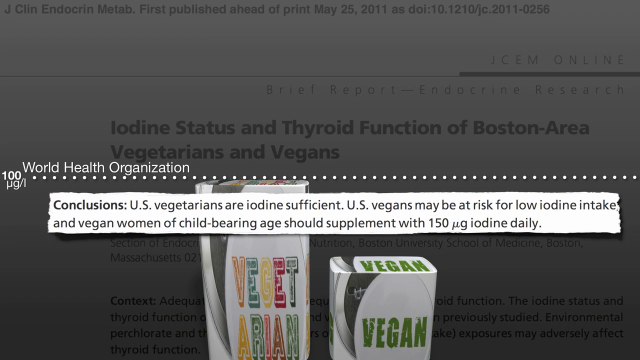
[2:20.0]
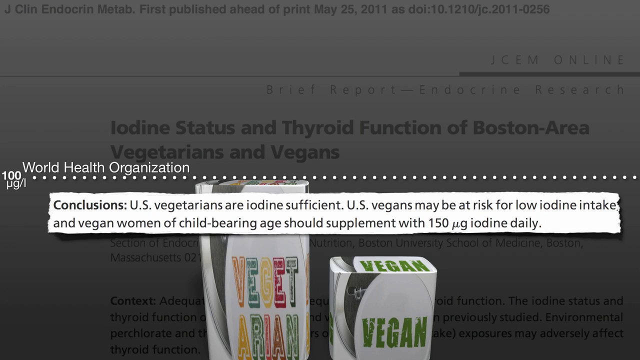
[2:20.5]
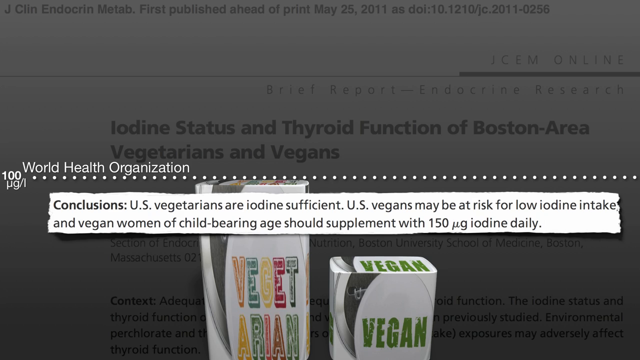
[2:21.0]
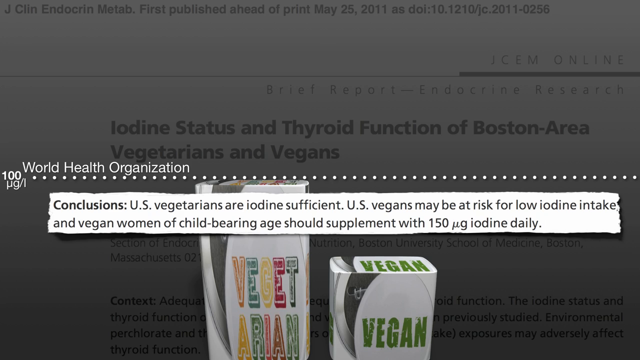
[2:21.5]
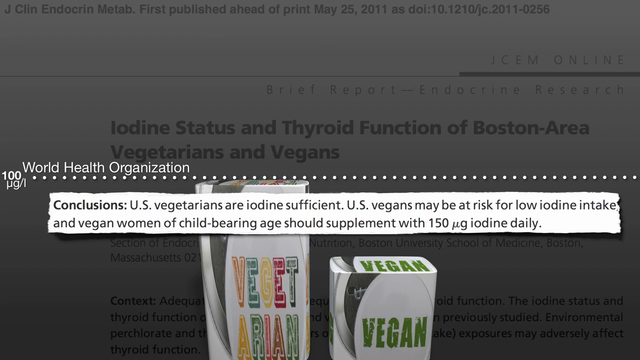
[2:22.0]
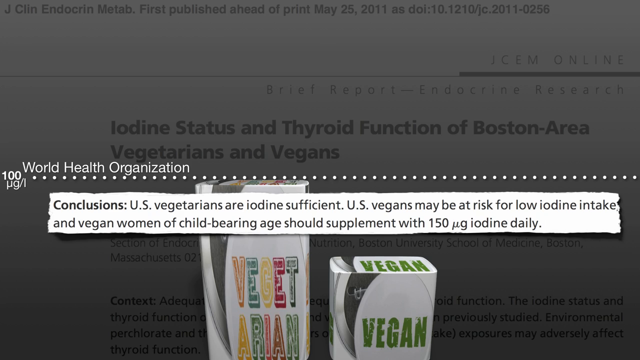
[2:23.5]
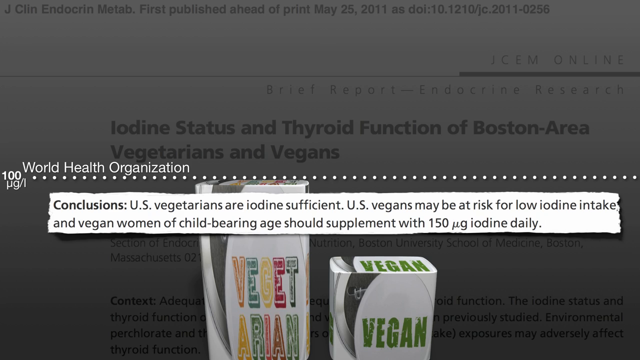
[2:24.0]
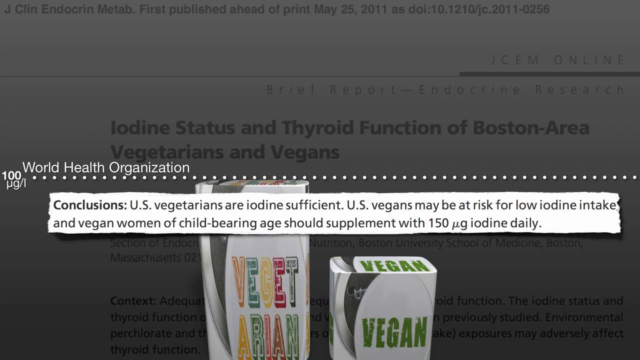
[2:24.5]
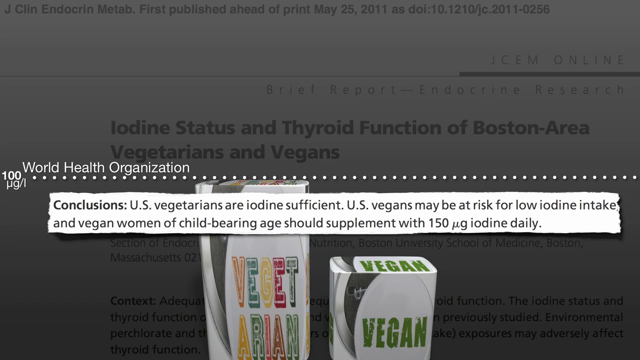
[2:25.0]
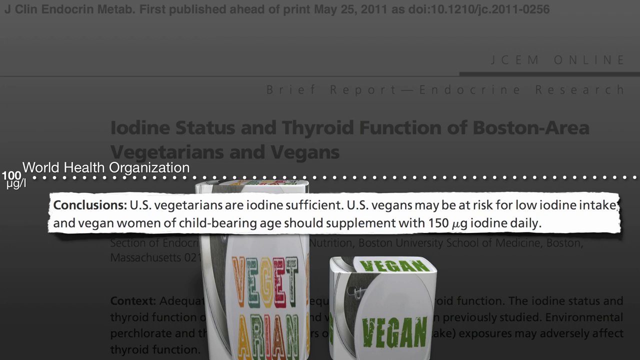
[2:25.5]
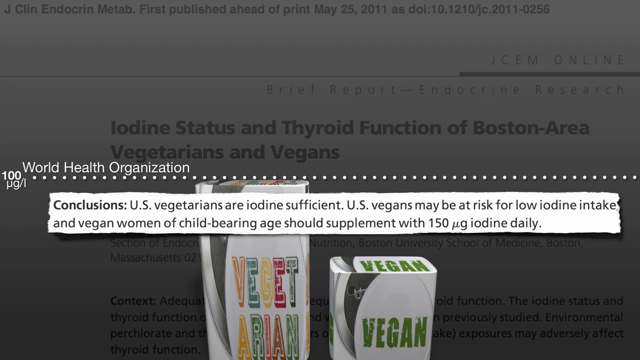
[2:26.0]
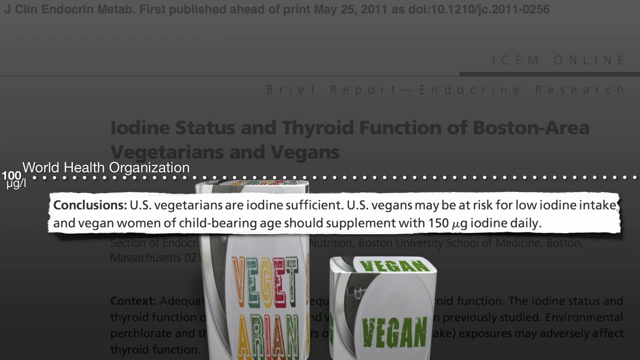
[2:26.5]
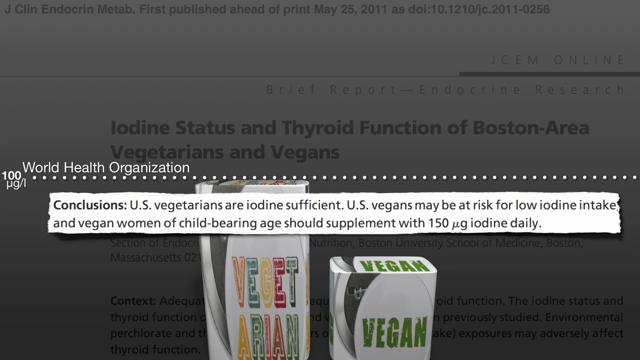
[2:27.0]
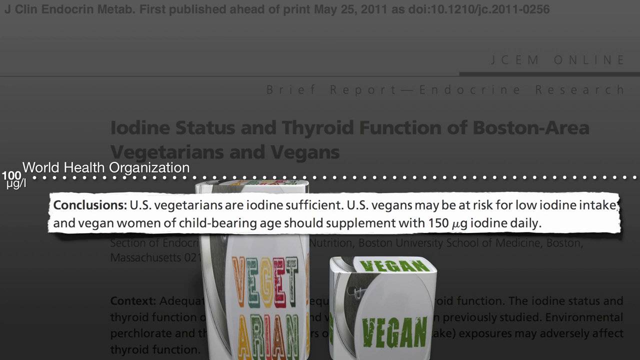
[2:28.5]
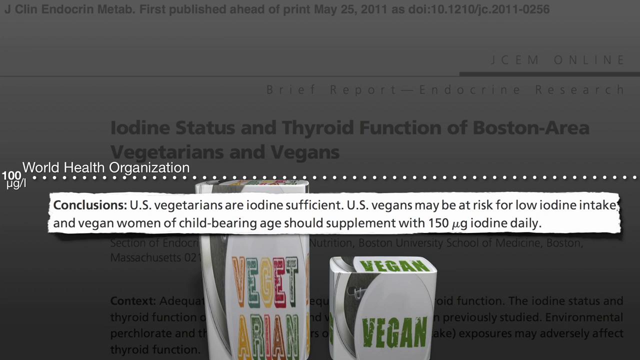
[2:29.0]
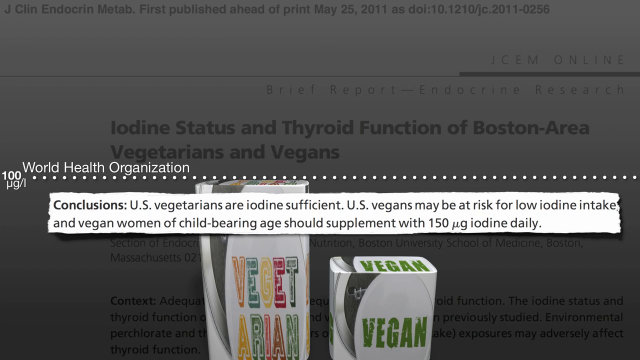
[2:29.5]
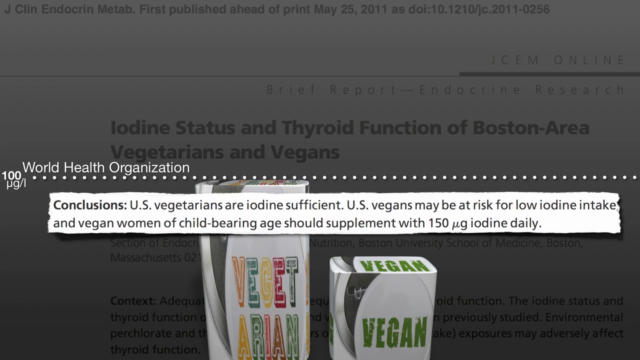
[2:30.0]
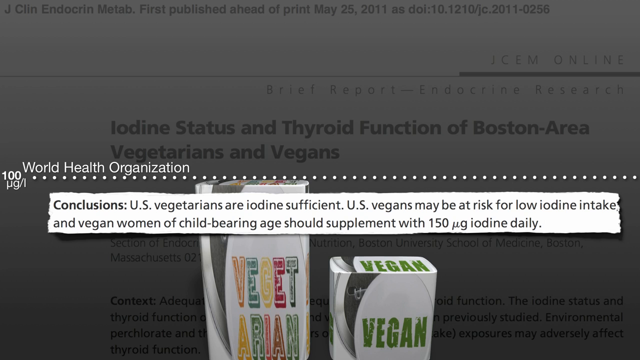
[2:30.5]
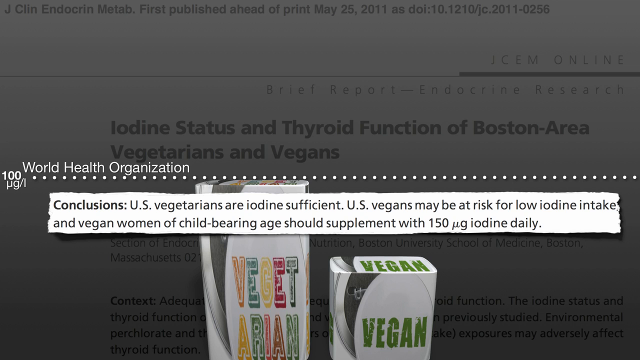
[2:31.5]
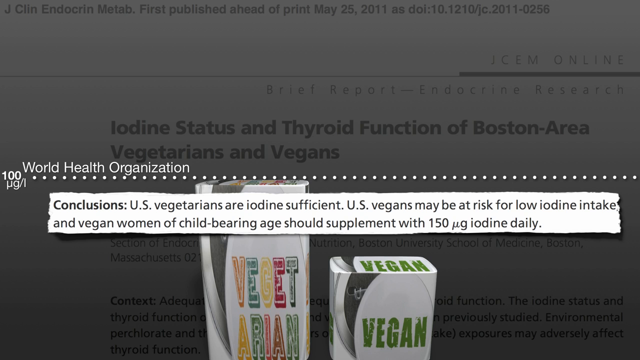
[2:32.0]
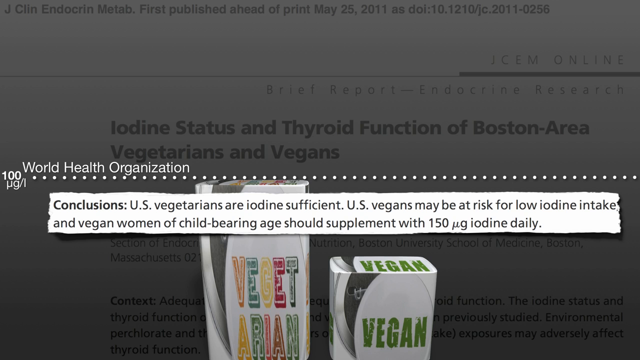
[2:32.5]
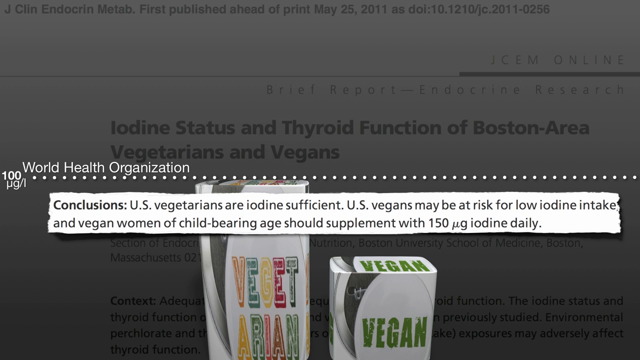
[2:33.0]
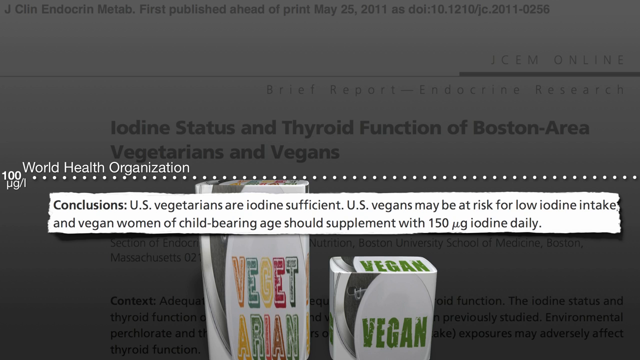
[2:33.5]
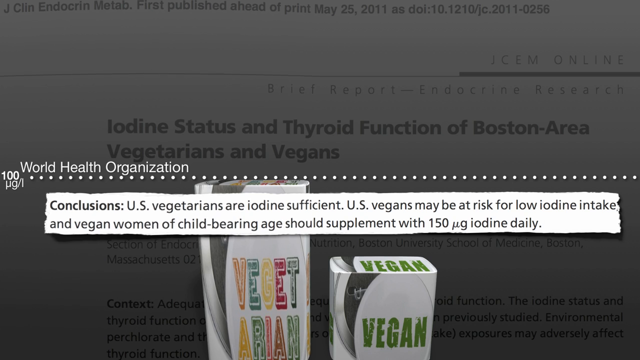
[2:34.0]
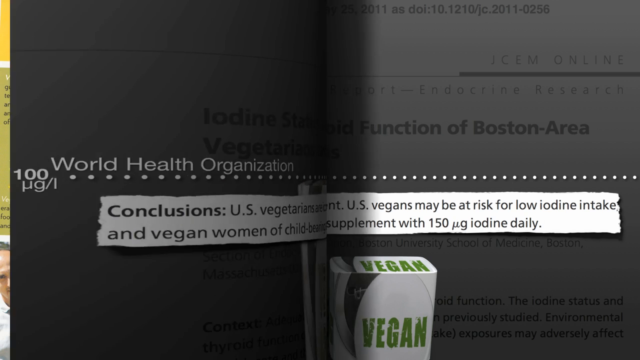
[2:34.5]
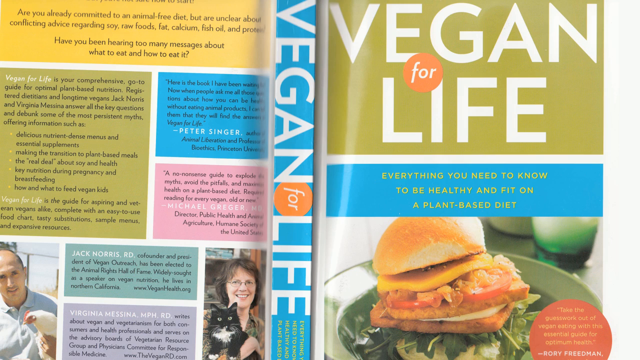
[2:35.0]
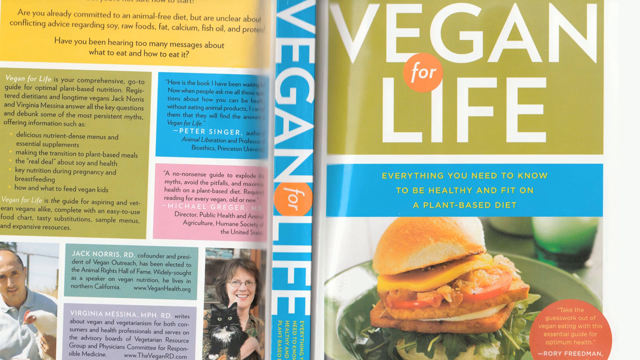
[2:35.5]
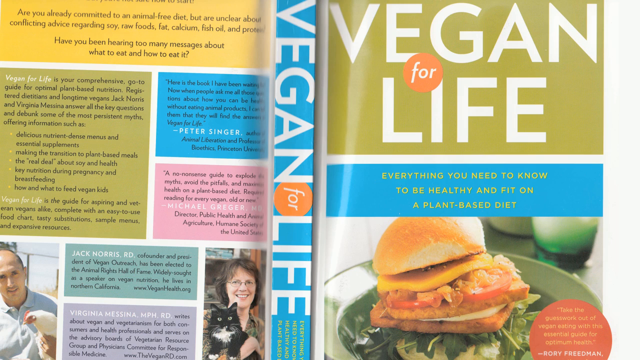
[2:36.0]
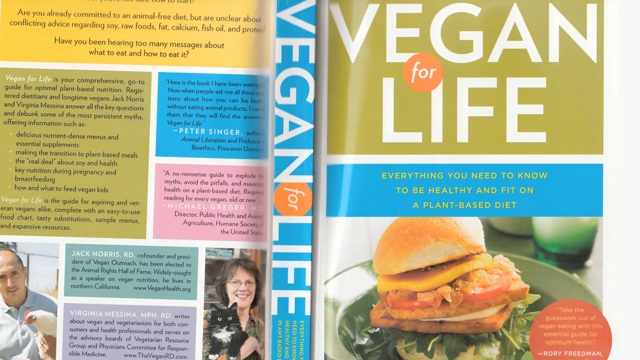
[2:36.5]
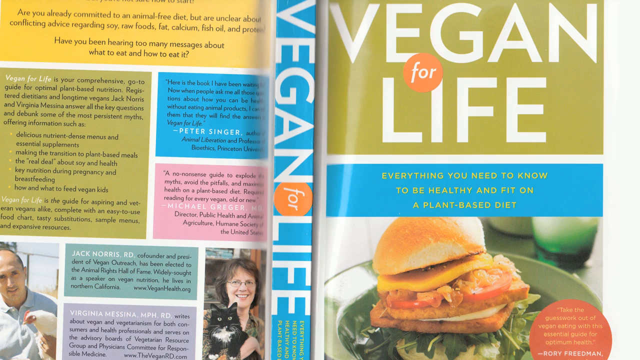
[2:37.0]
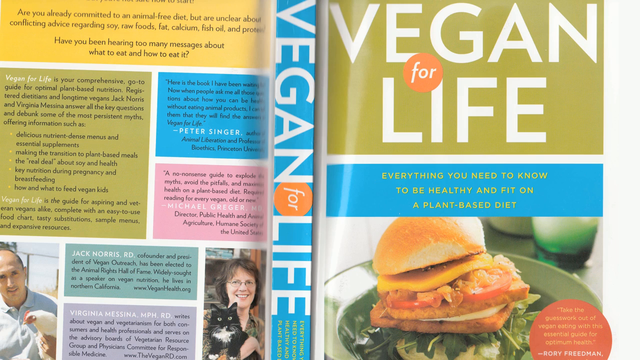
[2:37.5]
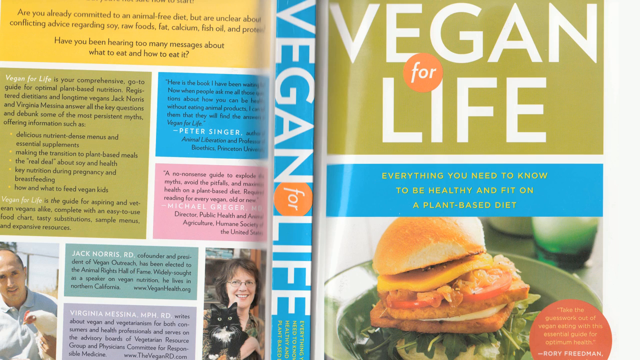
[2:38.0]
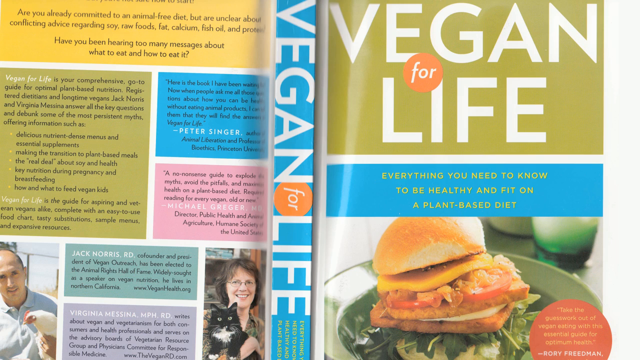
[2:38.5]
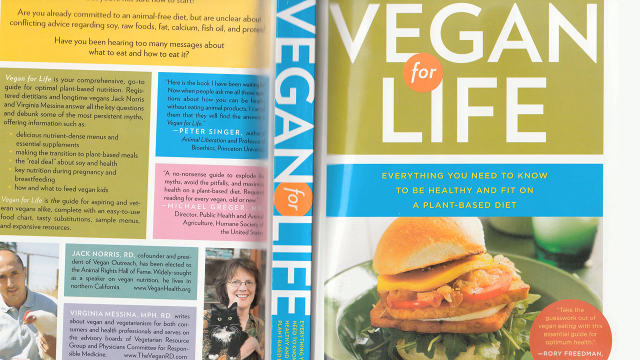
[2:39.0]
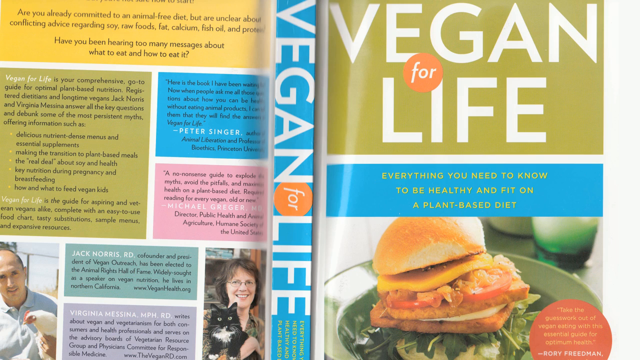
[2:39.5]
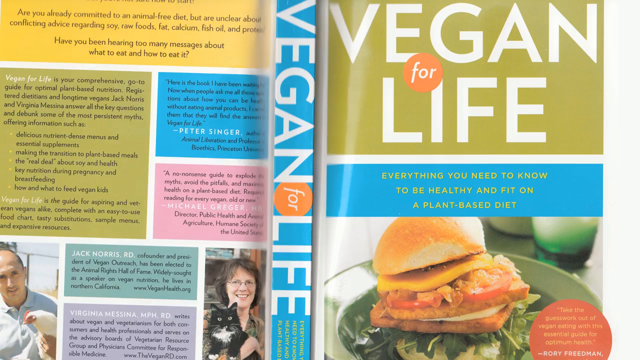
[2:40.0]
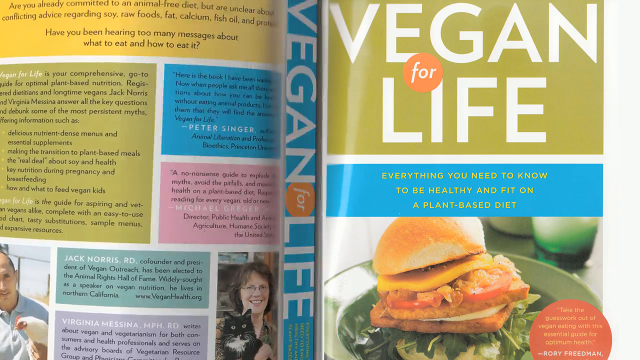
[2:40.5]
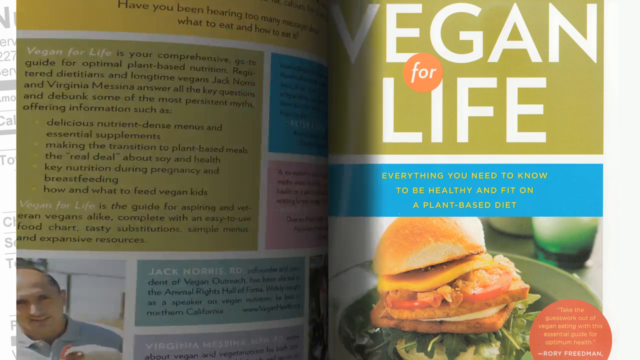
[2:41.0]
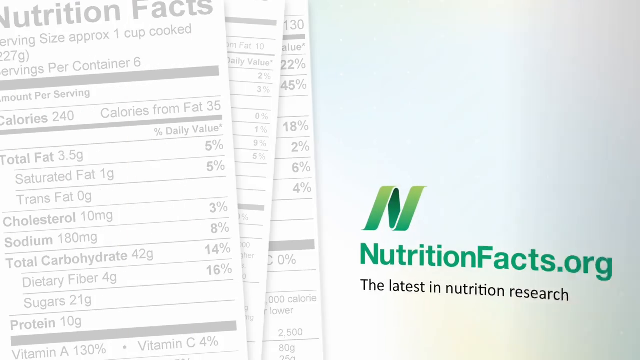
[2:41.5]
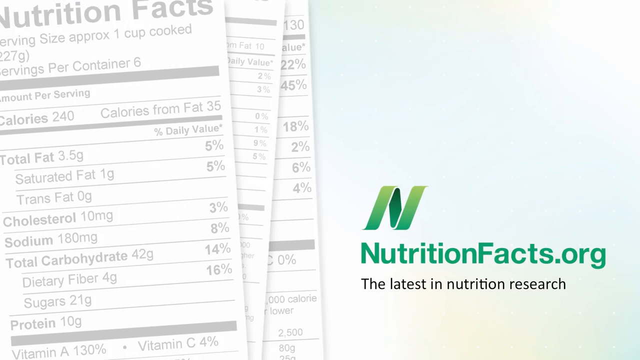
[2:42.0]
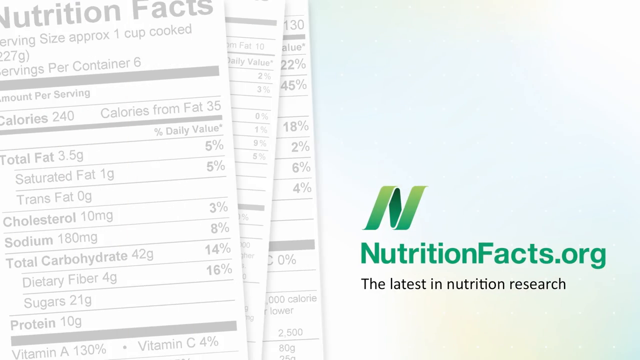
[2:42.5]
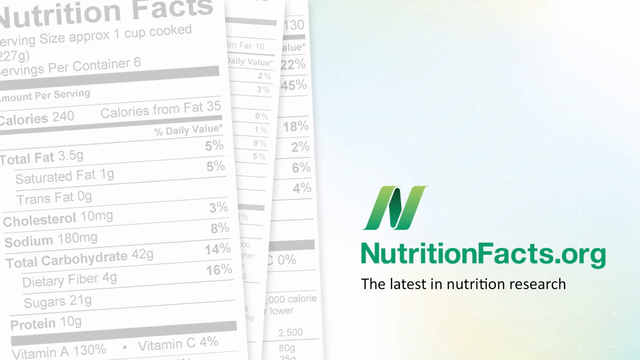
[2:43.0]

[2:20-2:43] Once again a grayed-out page appears that says "World Health Organization..." followed by "Conclusions US vegetarians are iodine-sufficient US vegans may be at risk for low iodine intake and vegan women of childbearing age supplement with 150 UG iodine daily." A box shows multicolored letters: an orange B, an aqua E, a yellow G, a red E and a capital T, and underneath a capital A with orange, aqua and blue letters I, A, N. Next to it is something that looks like the top of a toilet lid reading "VEGAN" in green capitals, and below that a white toilet lid with a word across it as well. The video then flashes to a page showing "vegan for life" on the right-hand side, which looks like a cookbook. "Vegan" is in large white lettering, with a small circle that says "for" and then "life." Underneath is a blue column that says "everything you need to know to be healthy and fit on a plant-based diet." A sandwich with cheese is shown; its filling is hard to make out, possibly some type of tofu or chicken. To the left are more words in different blocks, one saying "are you already committed to an animal free diet? But are unclear about conflicting advice regarding soy raw foods fat calcium fish oil and protein" and another "have you been hearing too many messages about what to eat and how to eat it," on the left-hand side in light green. "Vegan for life" appears to the right in a blue column with a review from Peter Singer, and below it Michael Gregor MD. At the bottom it says "Jack Norris RD co-founder and president of vegan outreach." There is a man to the left of that and a woman to the right, with a black cat staring into the camera.